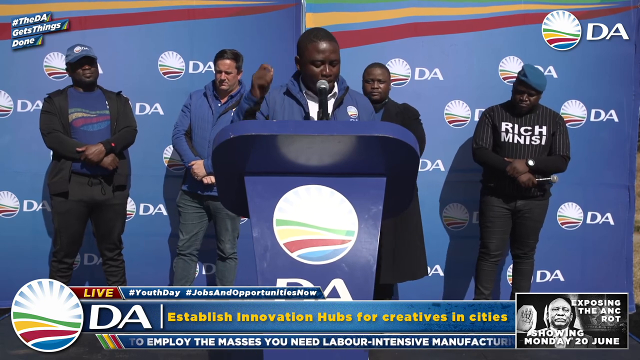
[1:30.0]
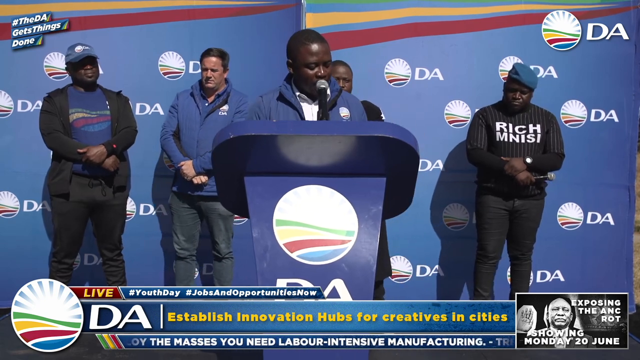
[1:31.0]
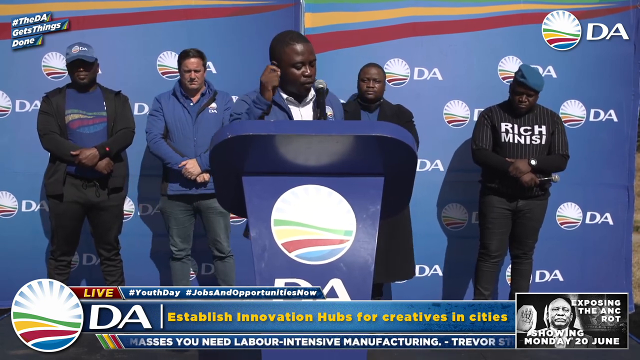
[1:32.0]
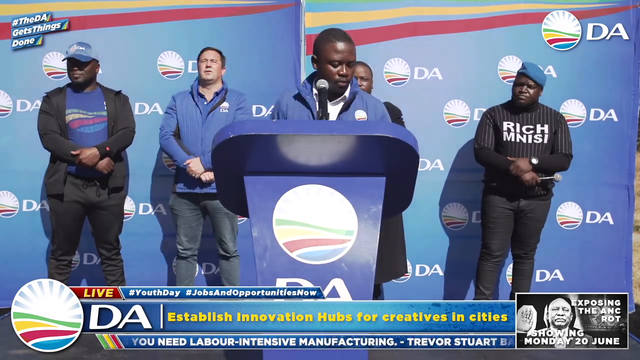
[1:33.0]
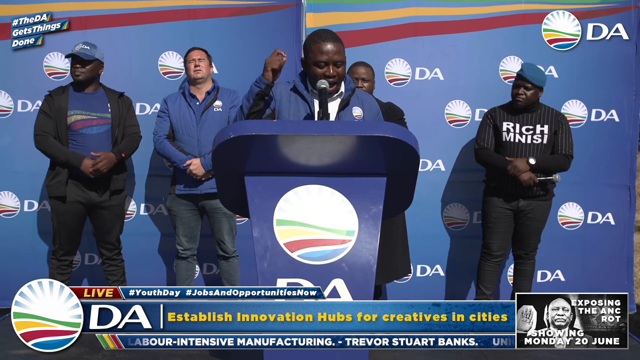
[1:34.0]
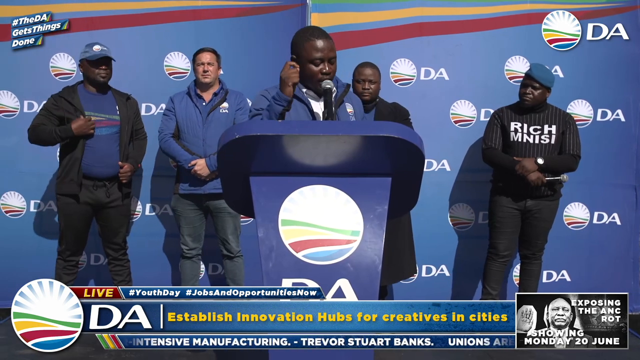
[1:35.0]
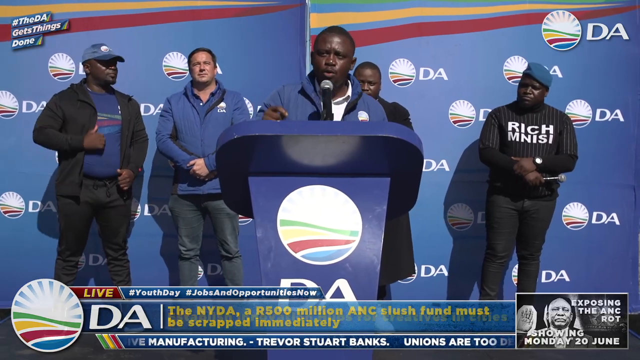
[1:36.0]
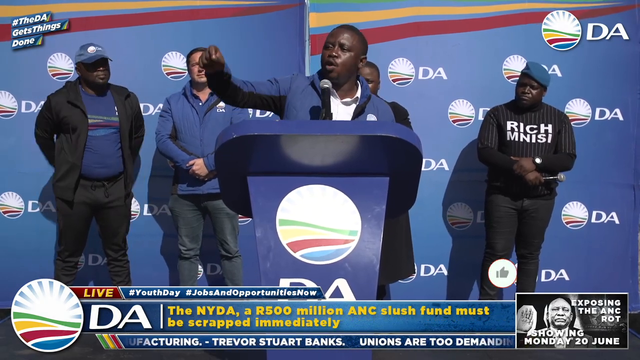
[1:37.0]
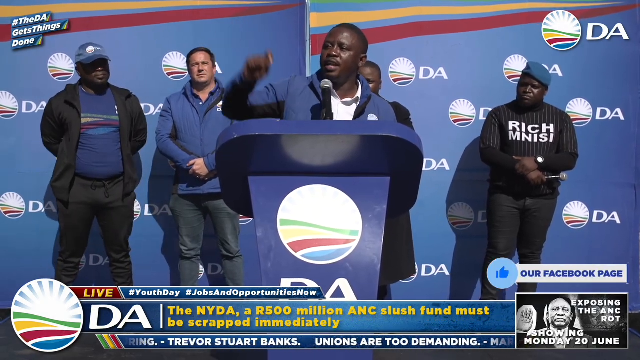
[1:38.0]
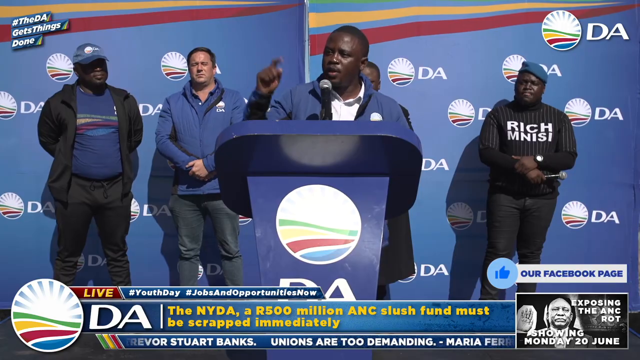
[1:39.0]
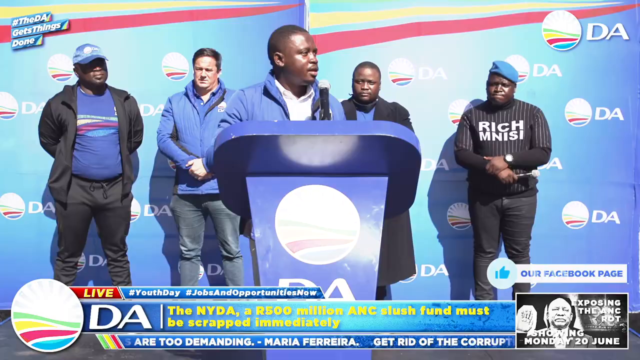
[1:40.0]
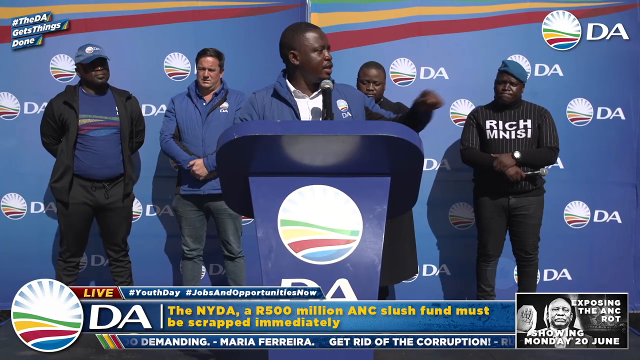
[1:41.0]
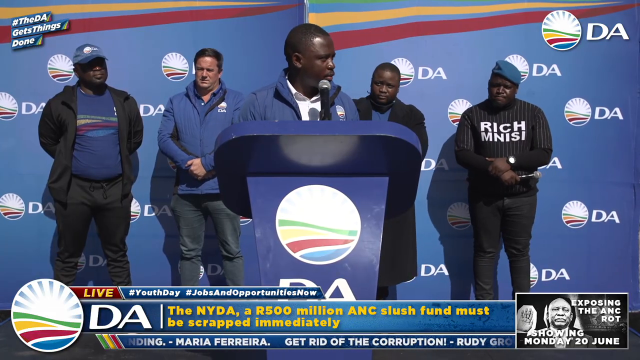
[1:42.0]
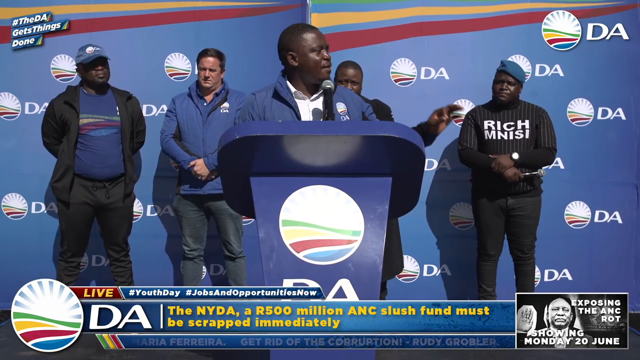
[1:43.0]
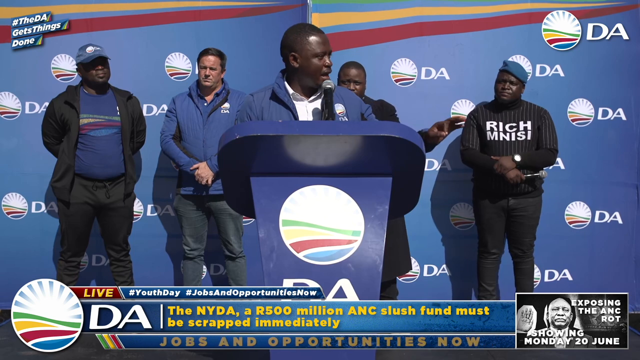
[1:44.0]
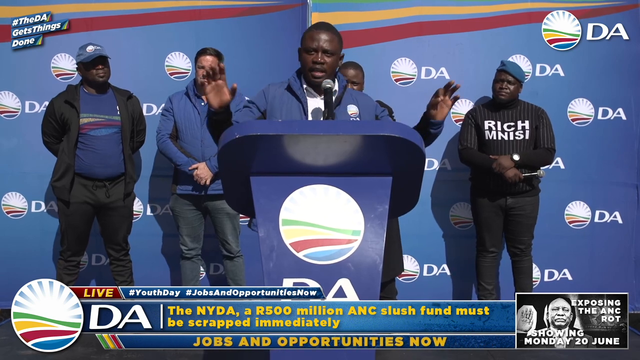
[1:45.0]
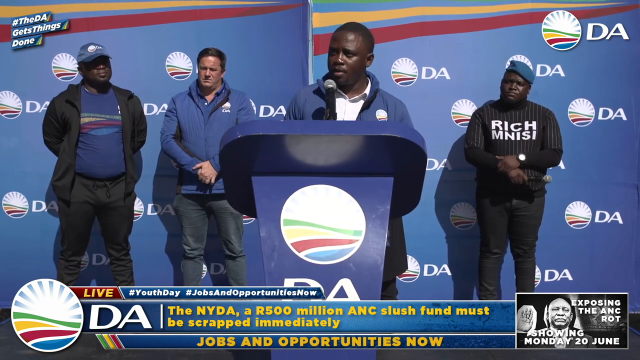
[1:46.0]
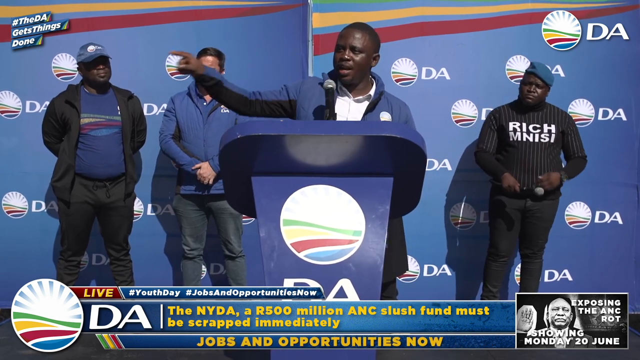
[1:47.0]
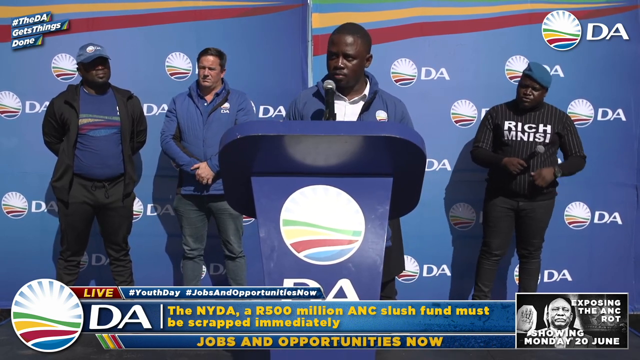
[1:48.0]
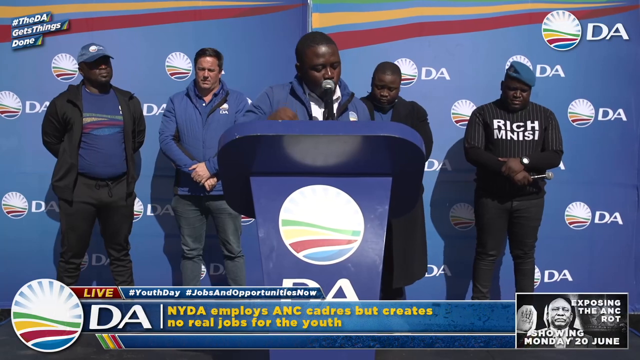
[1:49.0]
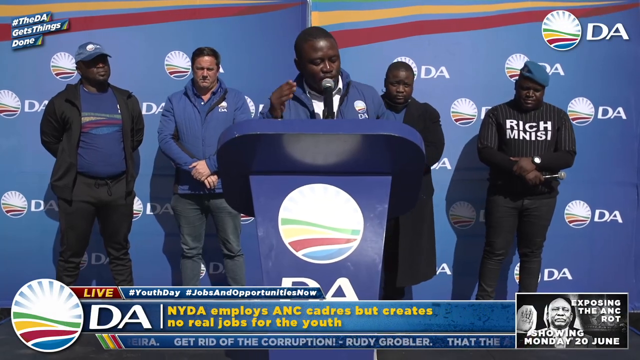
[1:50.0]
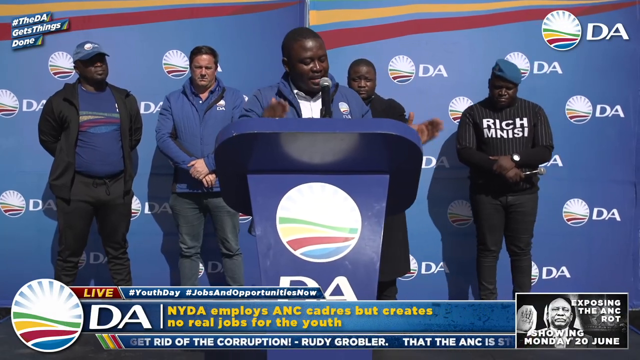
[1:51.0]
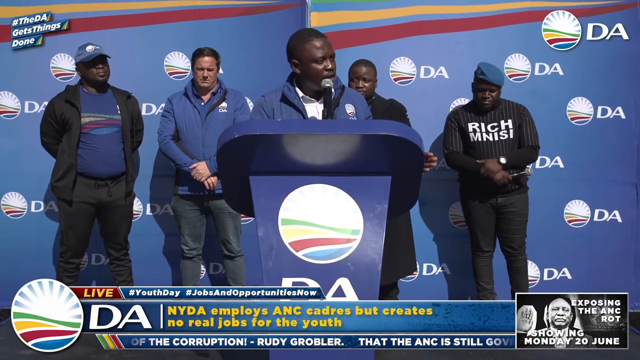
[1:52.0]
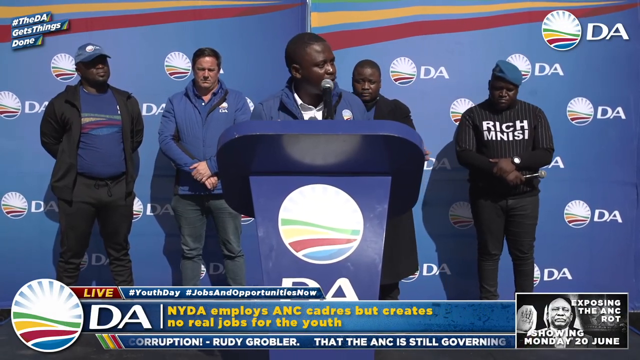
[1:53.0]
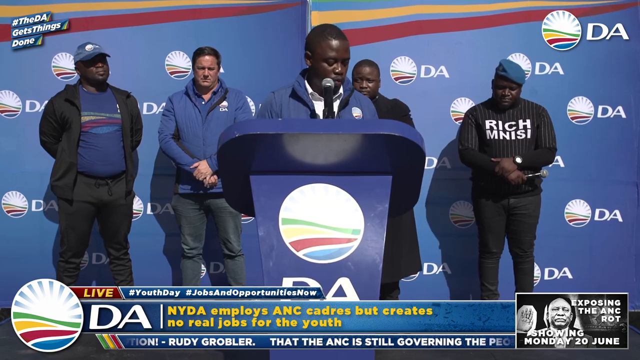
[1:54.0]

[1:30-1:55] The text changes to "the NYDA, a R500 million ANC slush fund must be scrapped immediately." A quote about getting rid of corruption appears, and then the ticker of quotes at the bottom changes to "jobs and opportunities now." The man at the podium continues to gesture a lot as he talks, and the man standing behind him nods a lot. Above the image in the right-hand corner, a Facebook link pops up. The ticker at the bottom says "Live DA," with no other news affiliation shown, so this appears to be the organization's own channel.